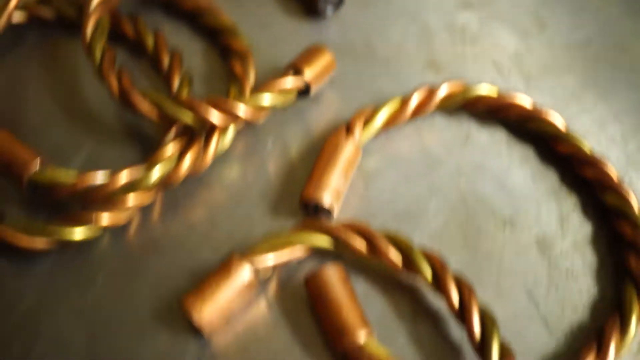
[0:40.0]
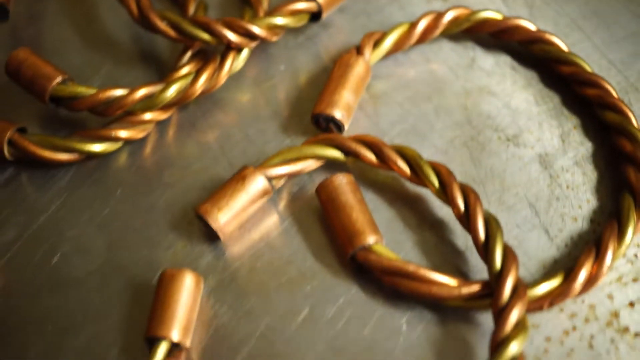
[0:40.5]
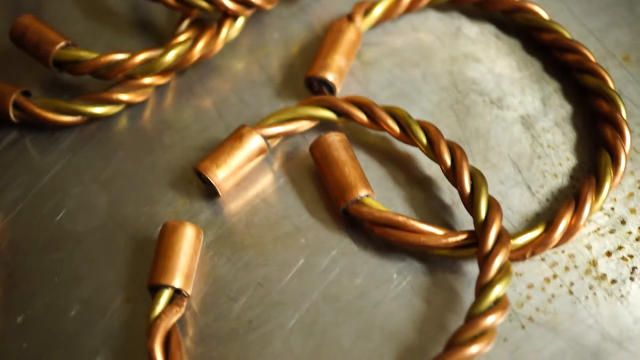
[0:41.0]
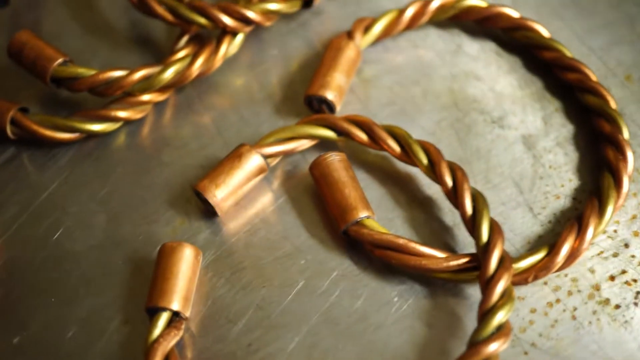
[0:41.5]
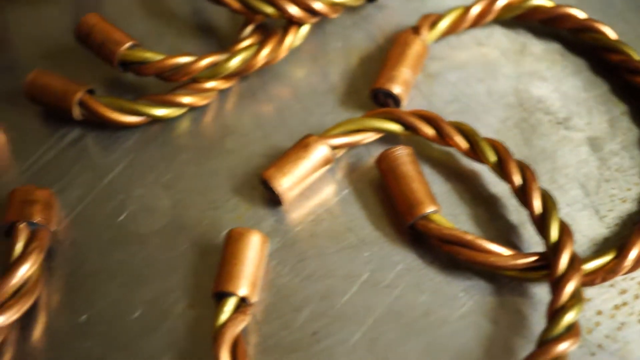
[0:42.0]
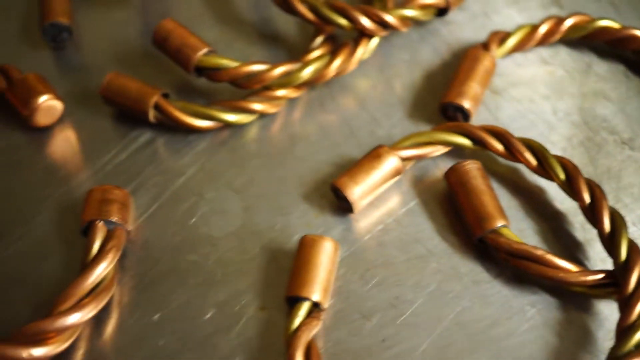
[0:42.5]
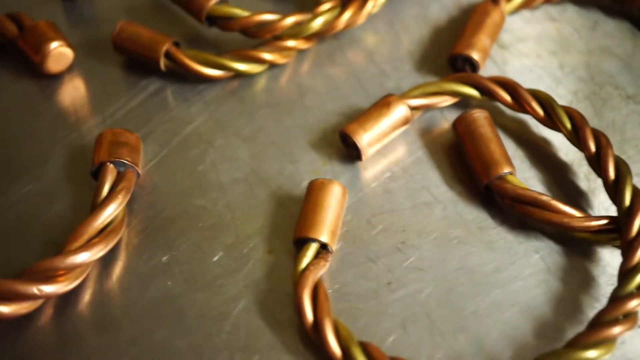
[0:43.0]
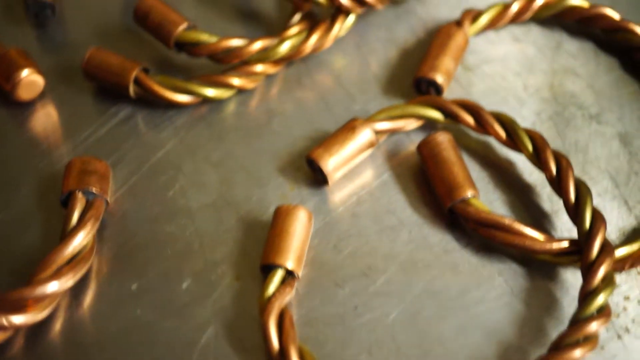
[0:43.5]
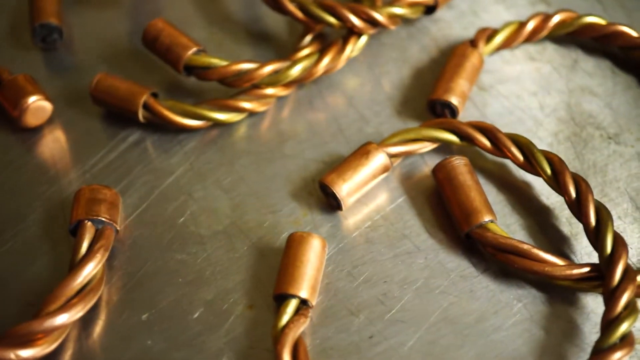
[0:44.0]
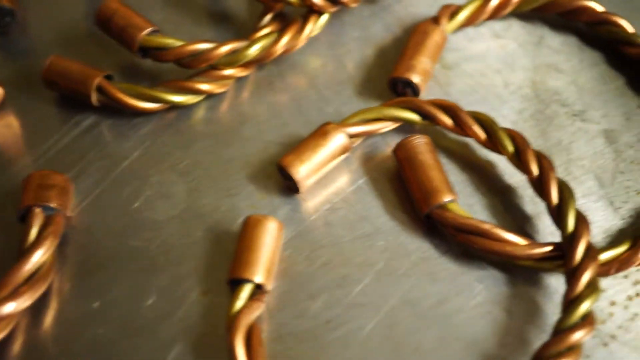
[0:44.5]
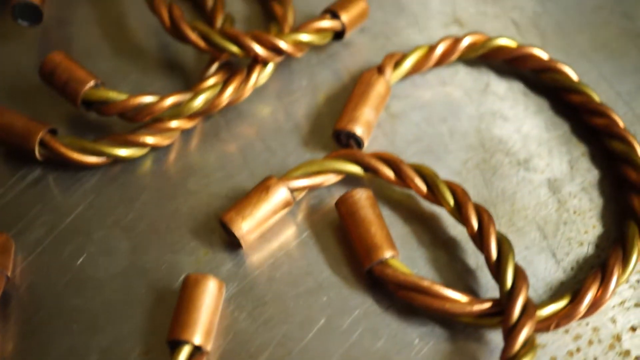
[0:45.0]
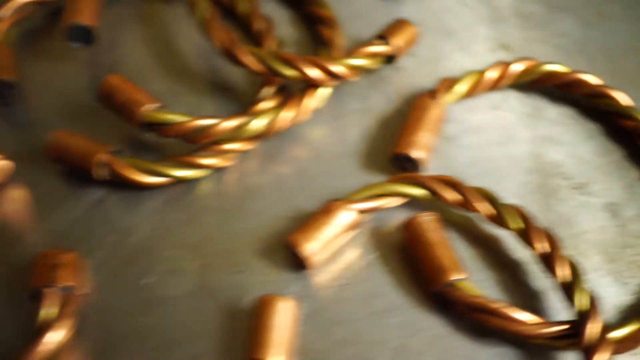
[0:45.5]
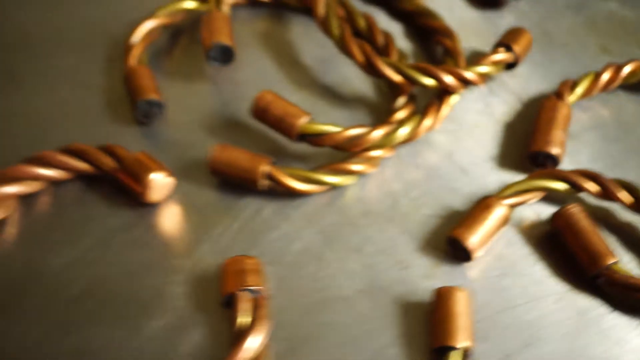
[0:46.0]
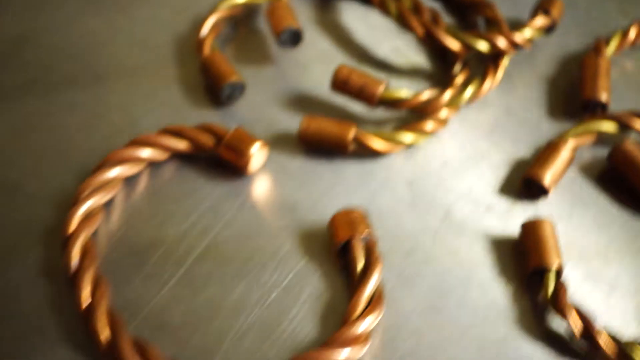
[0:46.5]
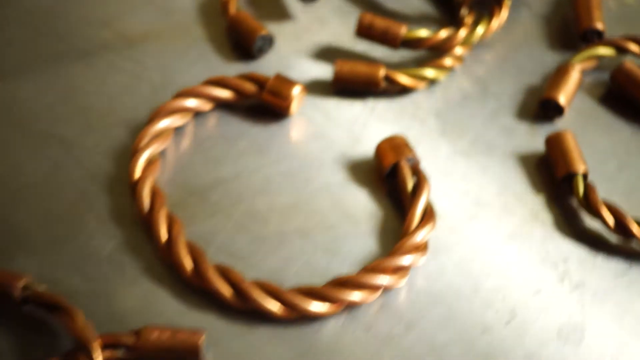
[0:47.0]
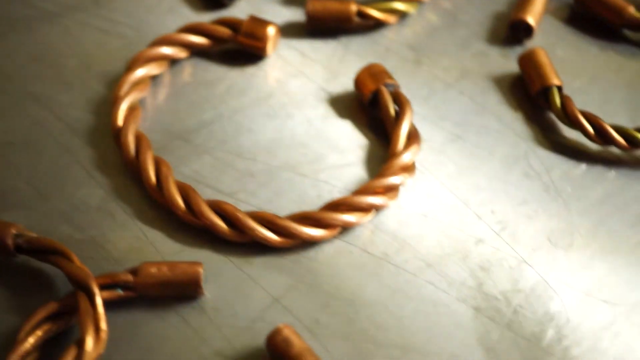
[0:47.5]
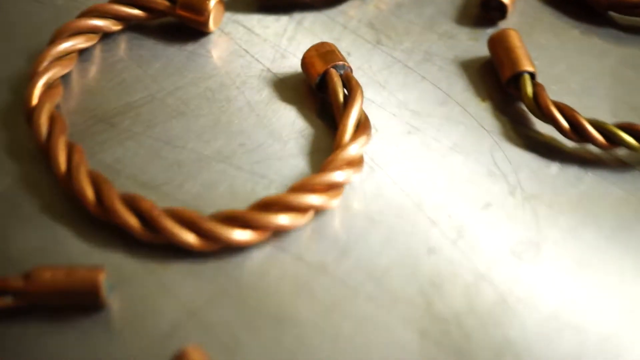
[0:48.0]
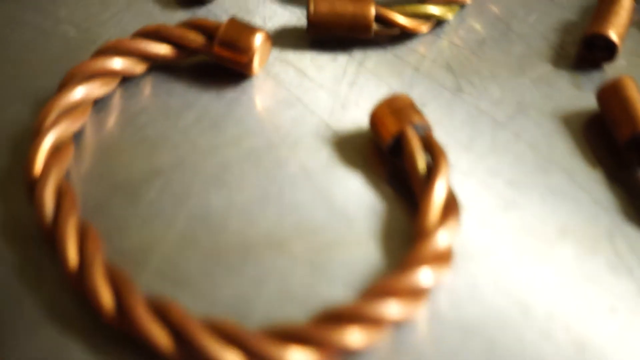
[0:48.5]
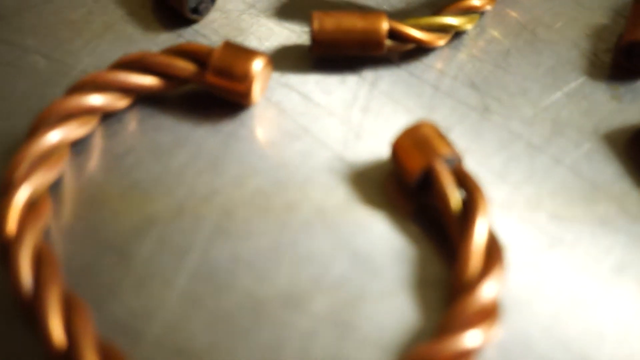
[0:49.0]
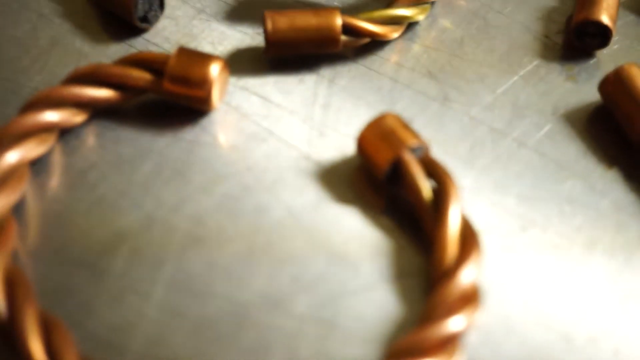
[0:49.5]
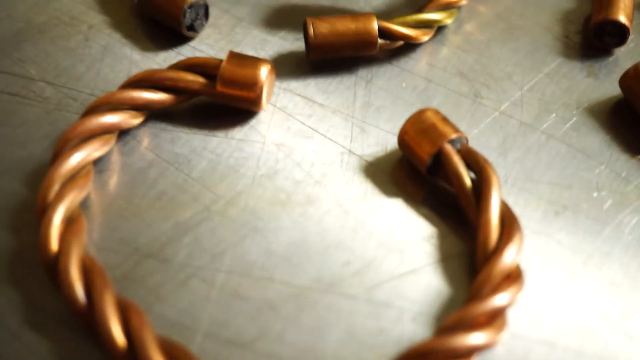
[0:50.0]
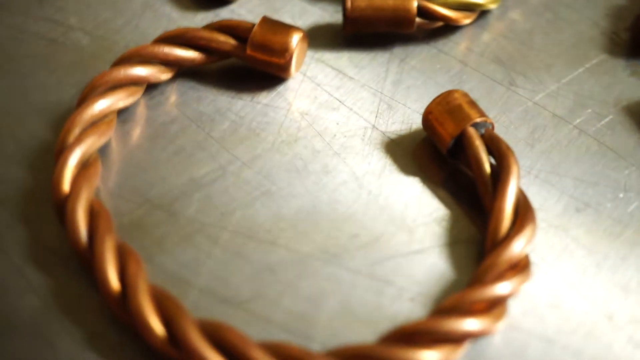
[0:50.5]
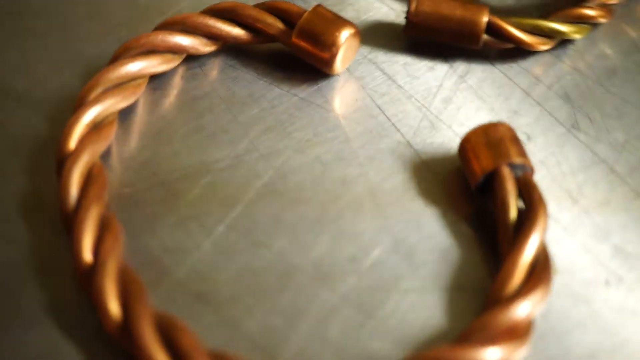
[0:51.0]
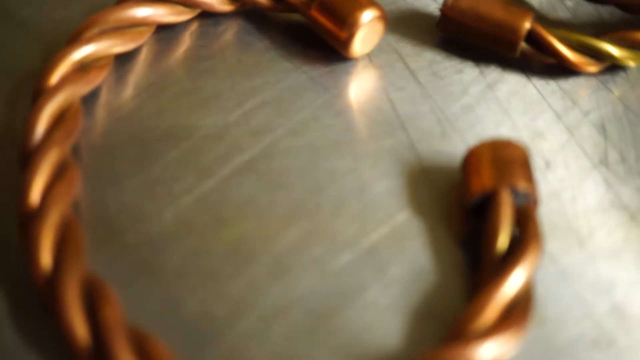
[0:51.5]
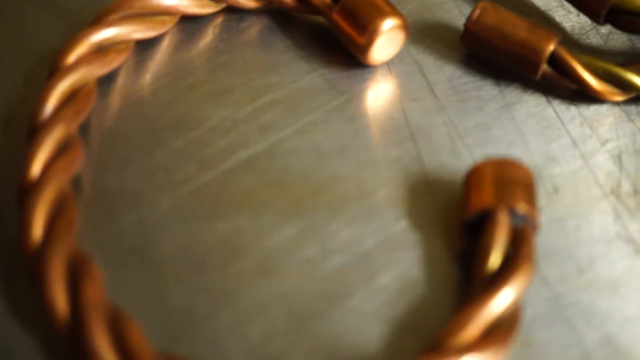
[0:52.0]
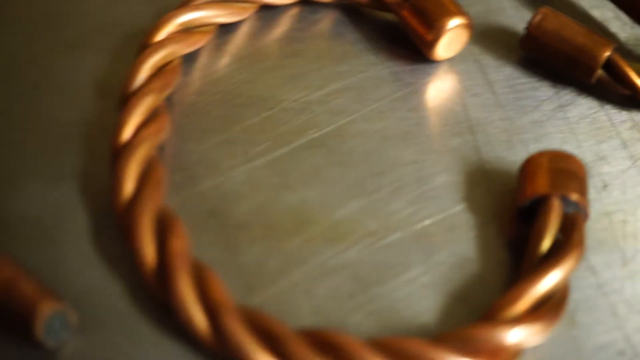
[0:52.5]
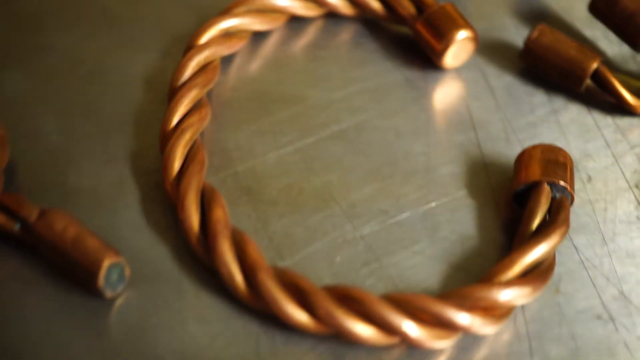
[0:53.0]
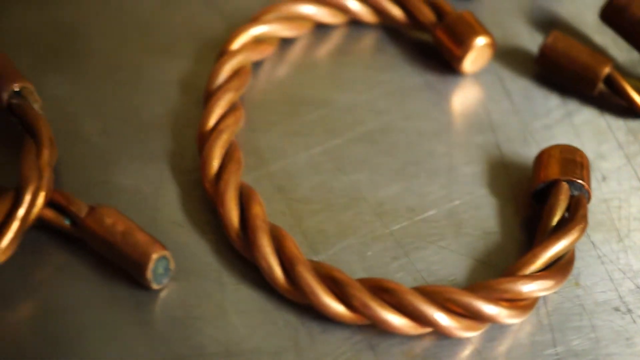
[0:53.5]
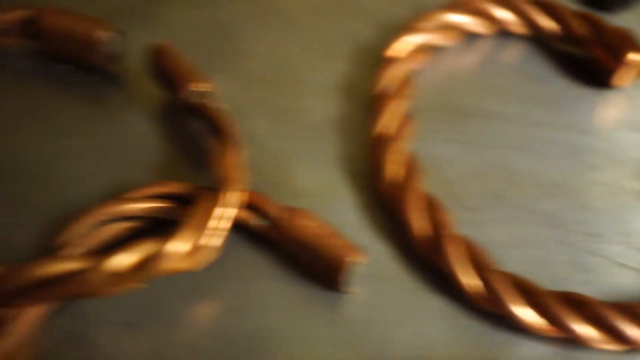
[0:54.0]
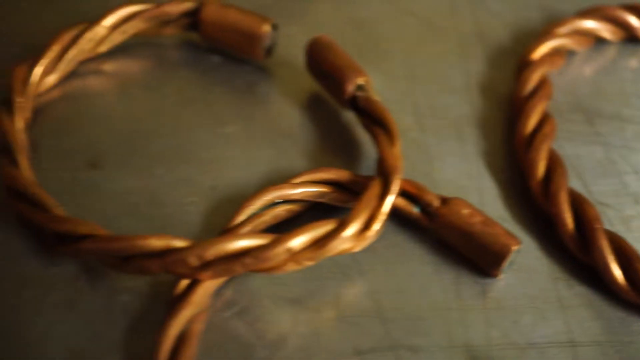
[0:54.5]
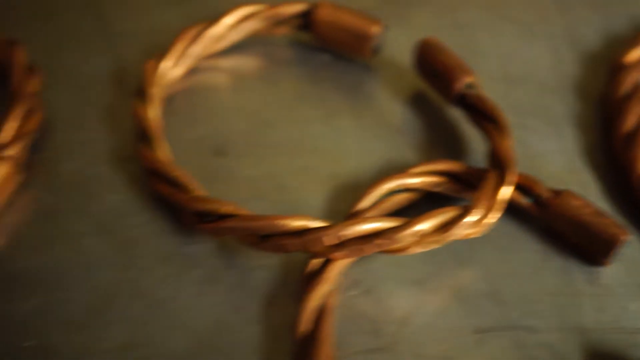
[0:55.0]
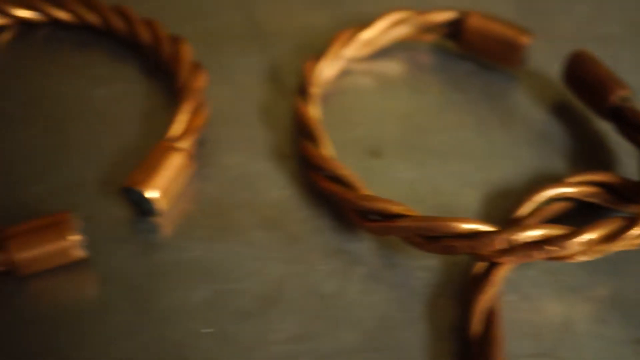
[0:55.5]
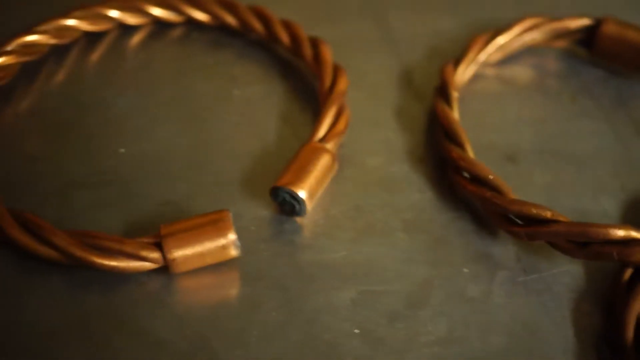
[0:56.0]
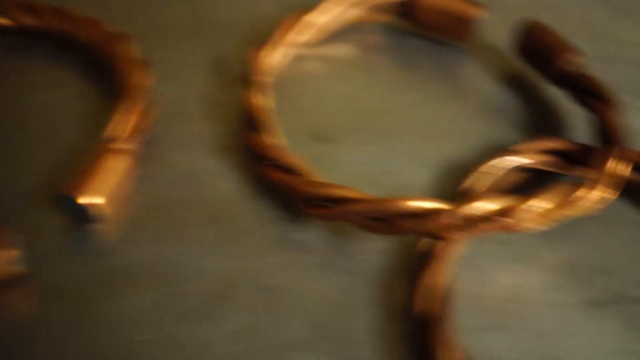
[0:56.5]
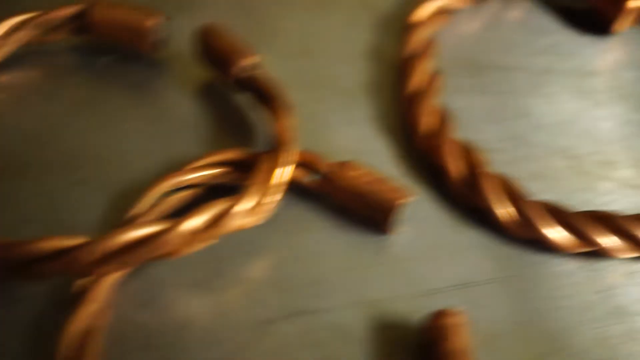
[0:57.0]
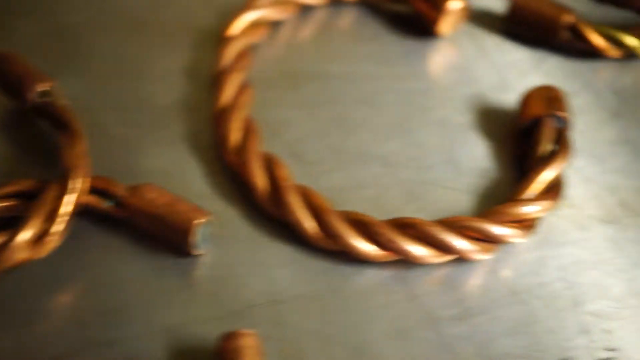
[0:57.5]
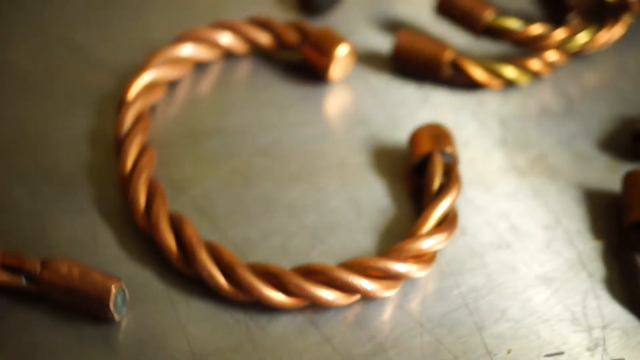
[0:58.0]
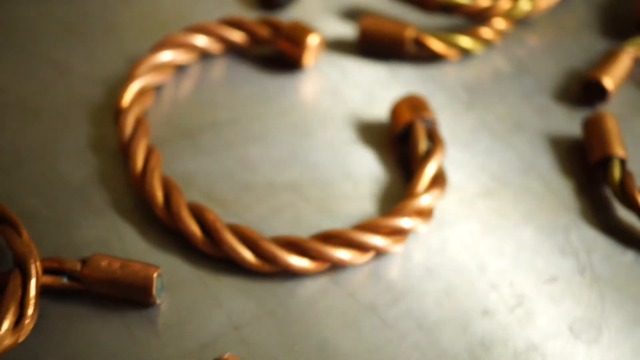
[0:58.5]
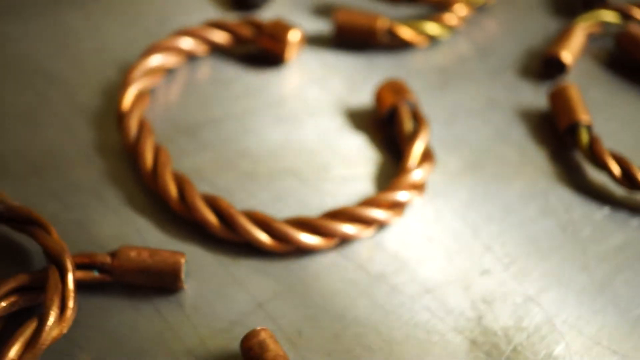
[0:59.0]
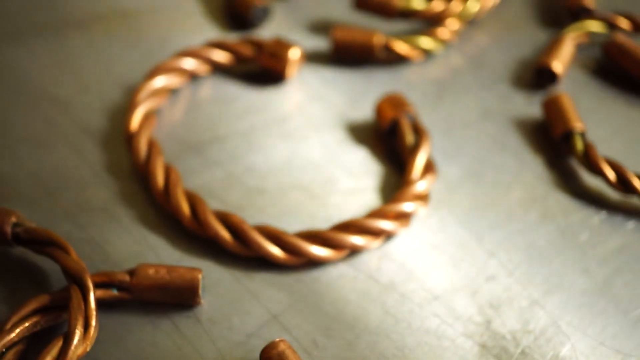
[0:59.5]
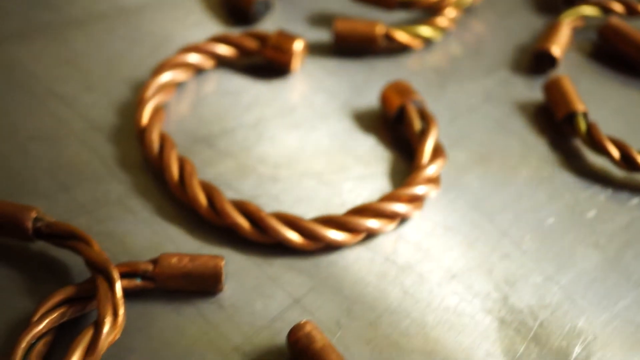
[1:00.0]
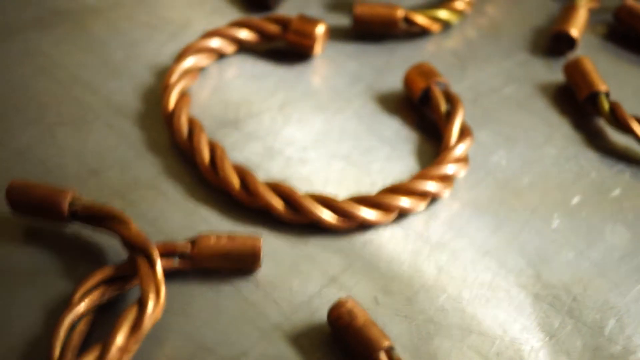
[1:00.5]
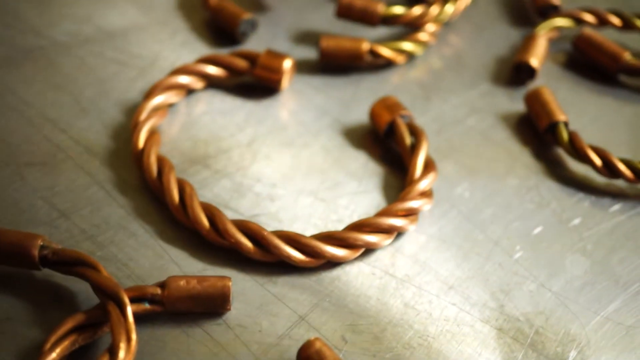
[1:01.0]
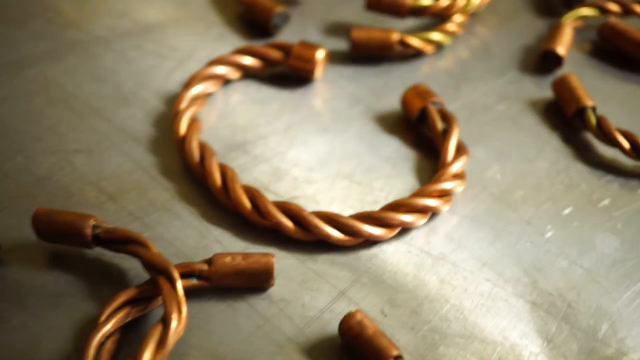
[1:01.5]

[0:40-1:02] A pile of braided bracelets made of brass and copper wires is shown. Each one seems to consist of three wires braided together, cut short and formed into an oval or circle-shaped C with an open end, with brass or copper-colored caps on either side of the opening. The person recording looks over the pile of completed bracelets; some are brass and copper, and some are just copper. They zoom in on one pair that is just copper, then look at various other pairs of all-copper bracelets. All of them are on a heavily scratched stainless steel surface, with multiple piled up in various states of completeness. The camera pans over them multiple times, as if showing them off, and ends on a pile of bracelets made of just copper.